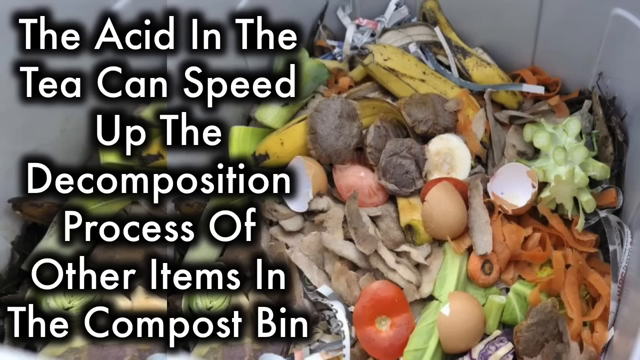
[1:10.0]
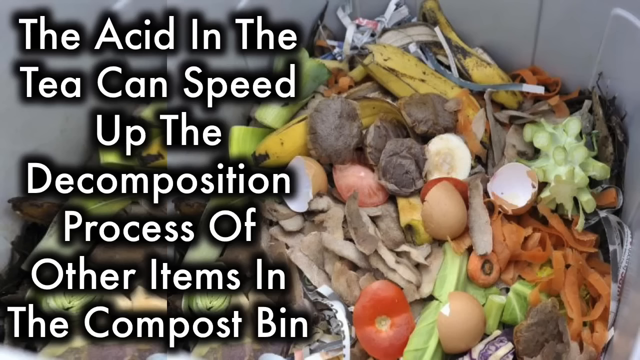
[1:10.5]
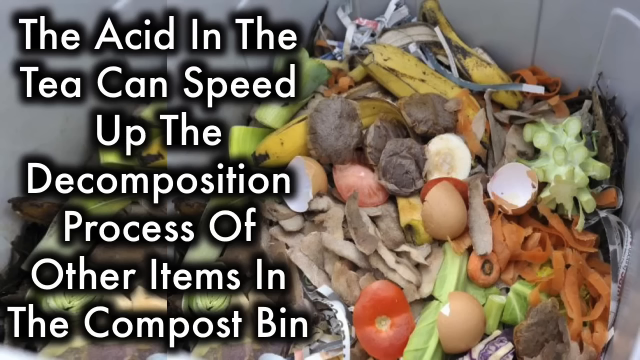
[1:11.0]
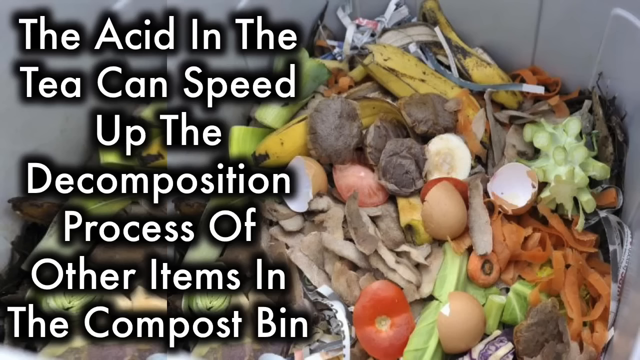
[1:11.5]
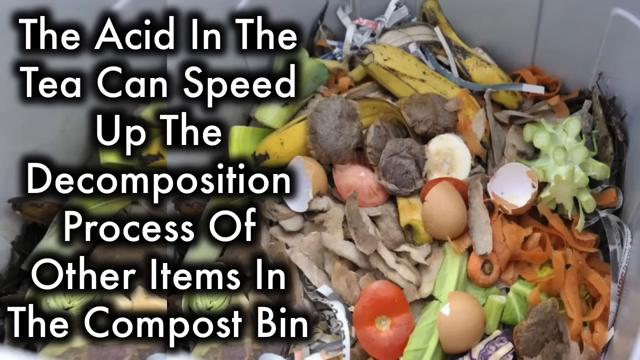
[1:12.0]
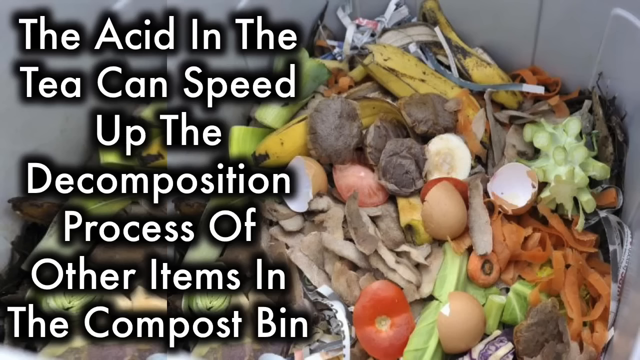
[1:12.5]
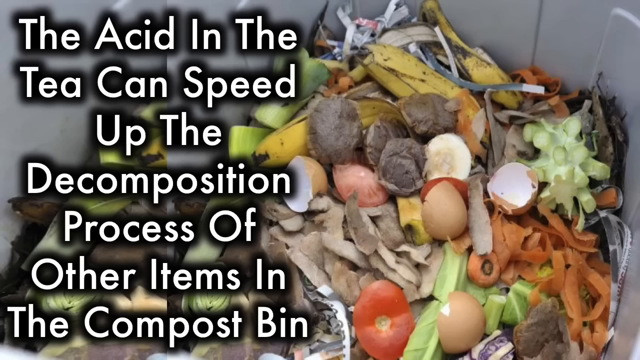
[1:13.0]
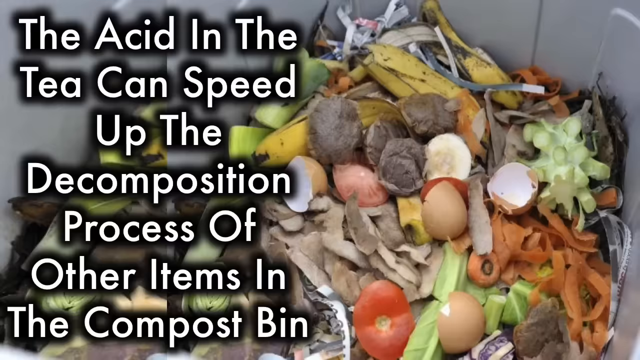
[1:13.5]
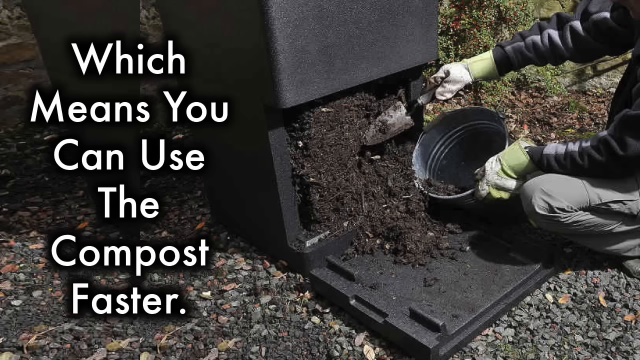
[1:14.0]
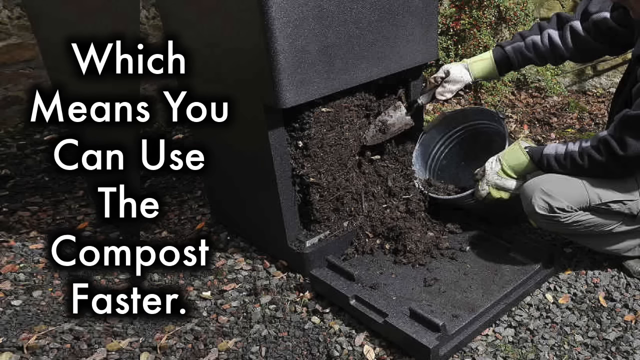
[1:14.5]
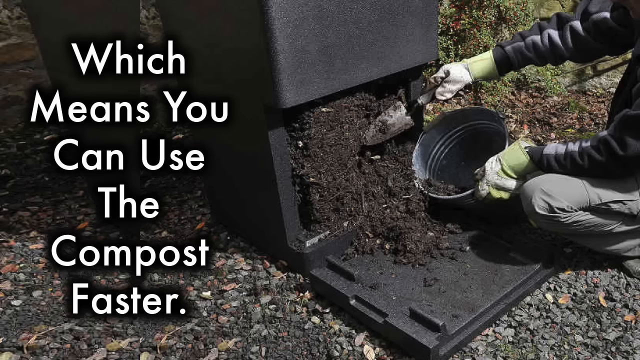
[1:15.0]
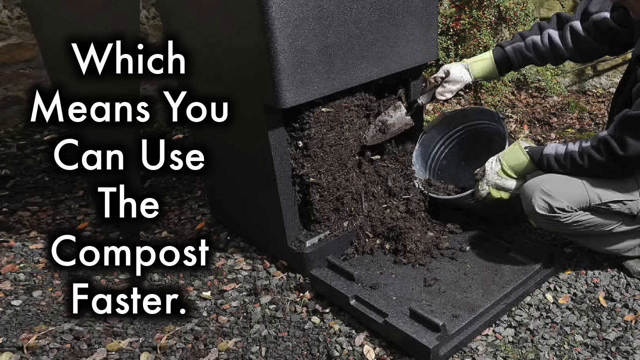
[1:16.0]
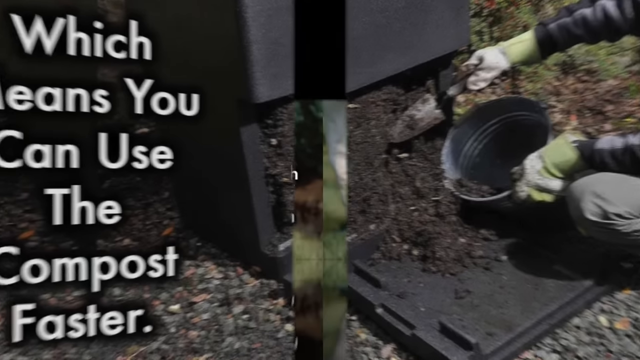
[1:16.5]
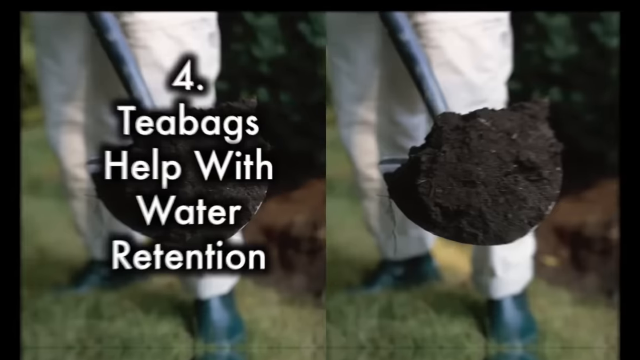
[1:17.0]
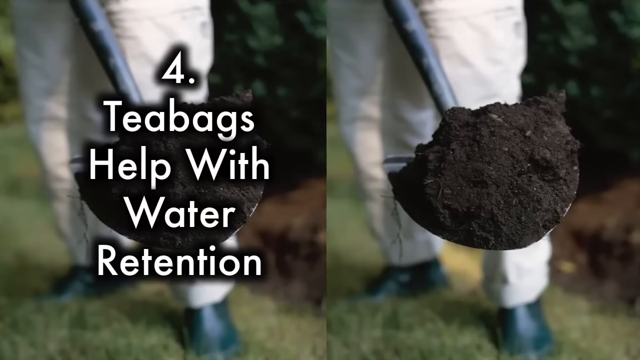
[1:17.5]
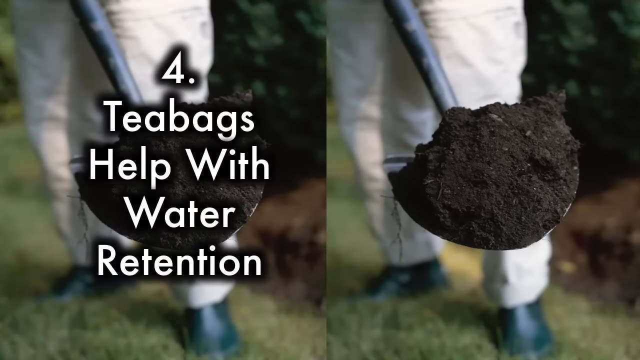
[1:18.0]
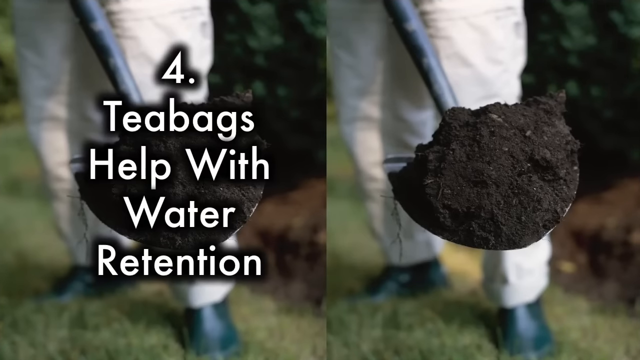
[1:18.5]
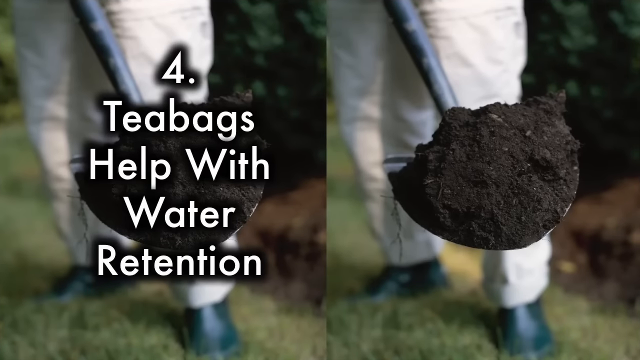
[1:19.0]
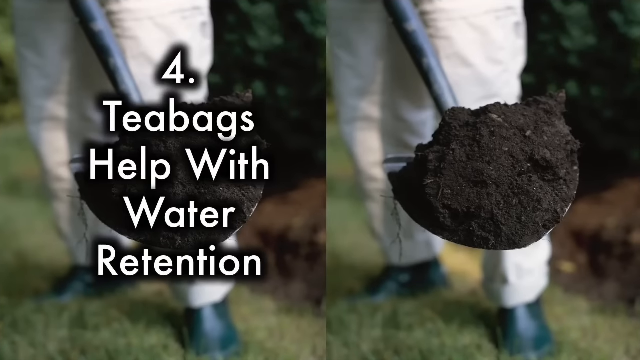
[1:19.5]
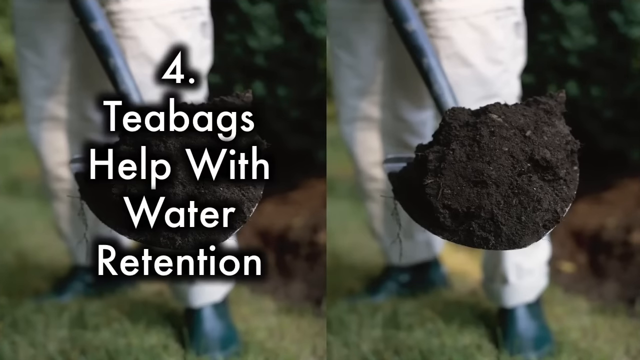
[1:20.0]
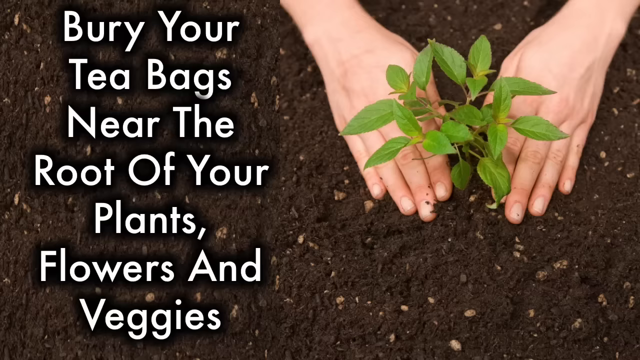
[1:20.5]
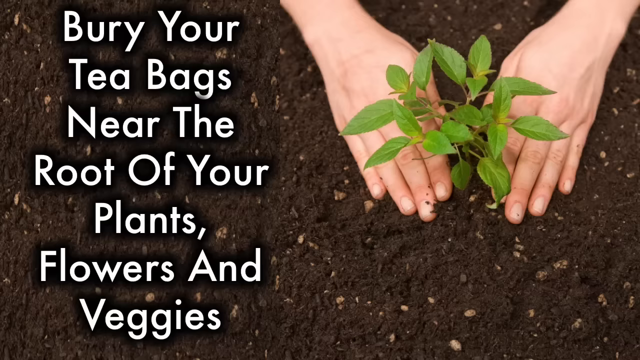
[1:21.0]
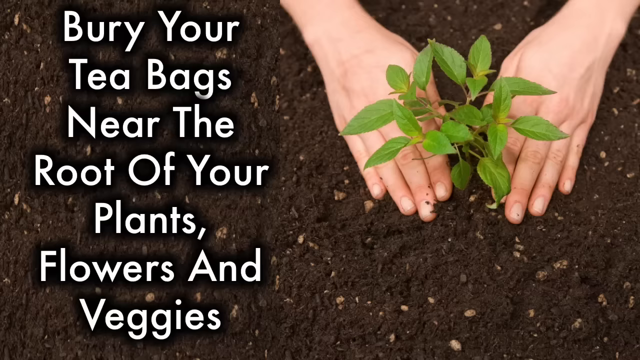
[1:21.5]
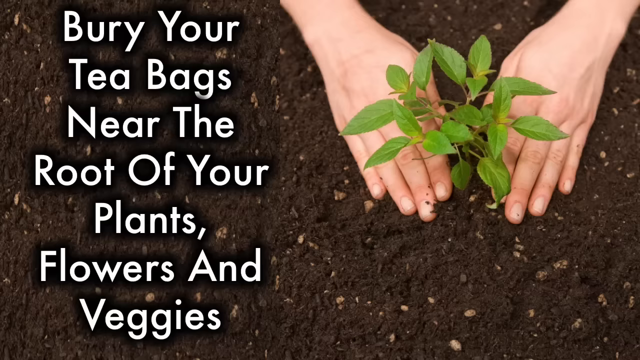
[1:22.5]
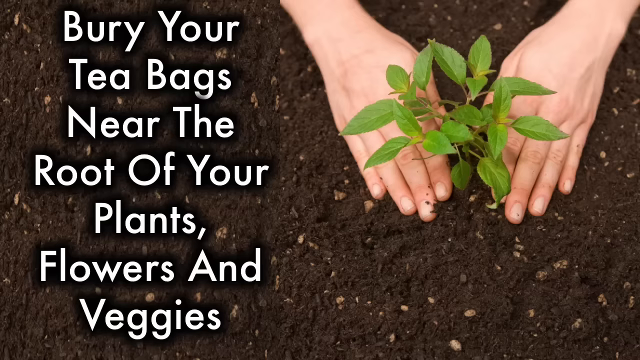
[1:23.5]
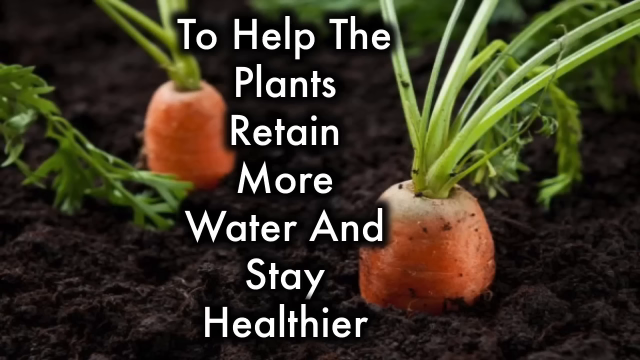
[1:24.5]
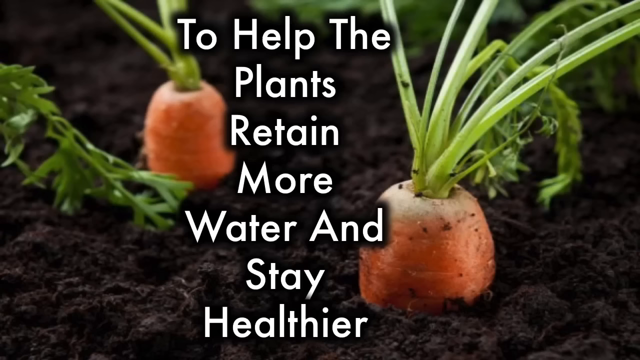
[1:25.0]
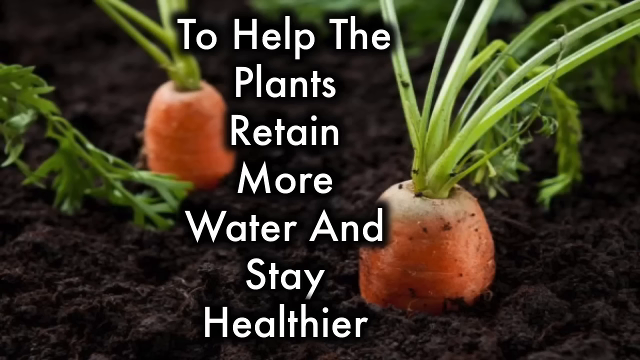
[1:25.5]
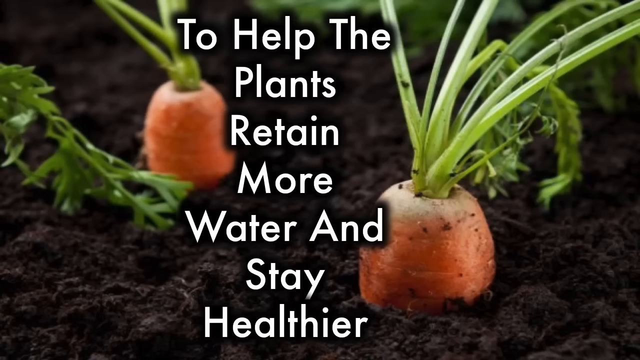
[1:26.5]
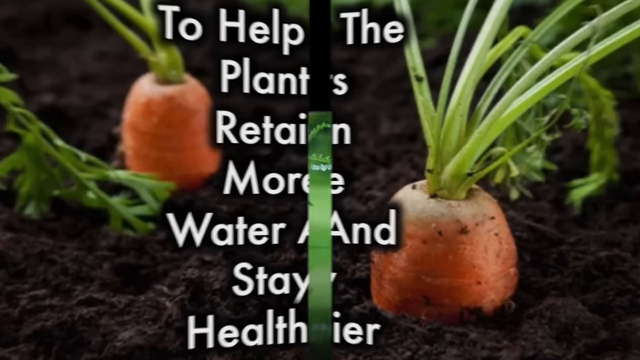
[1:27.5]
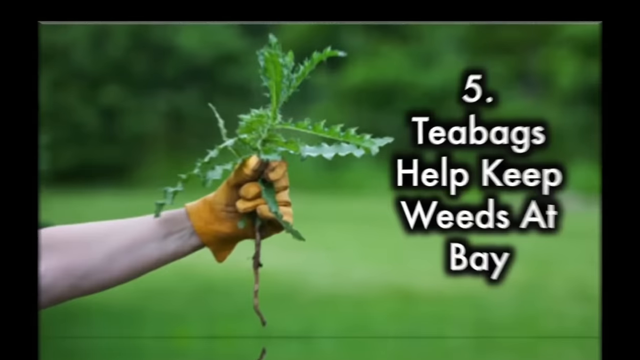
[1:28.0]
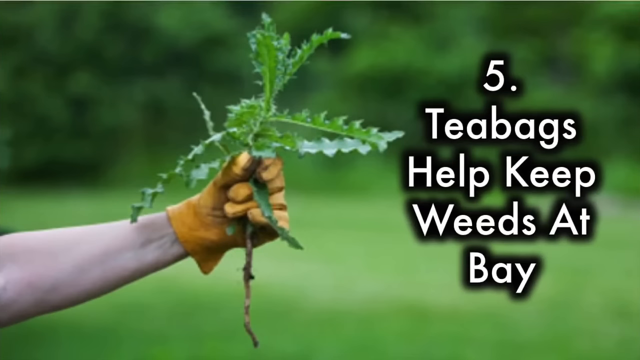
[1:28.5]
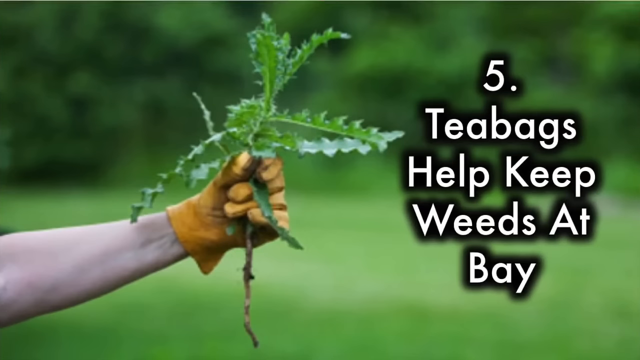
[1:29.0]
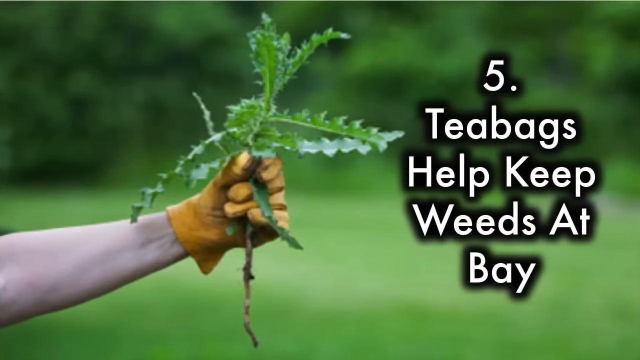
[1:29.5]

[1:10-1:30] The text about tea acid speeding up decomposition in the compost bin remains, and banana peels, cabbage, carrots, eggshells, tomato and other things are shown, with text indicating that the compost can be used faster. A man is shown trying to harvest the compost or manure.